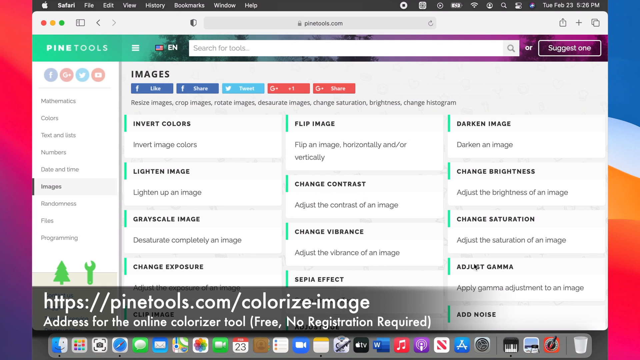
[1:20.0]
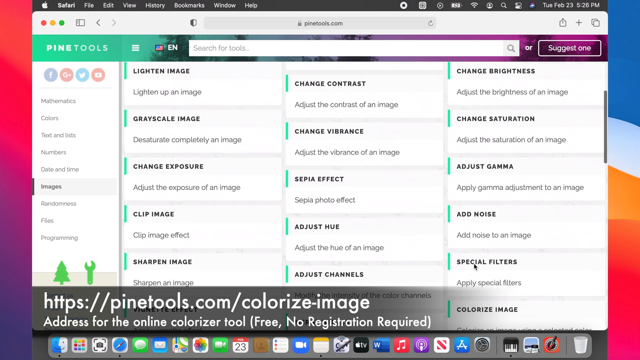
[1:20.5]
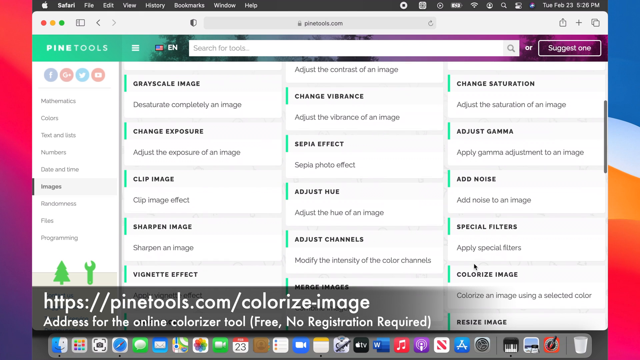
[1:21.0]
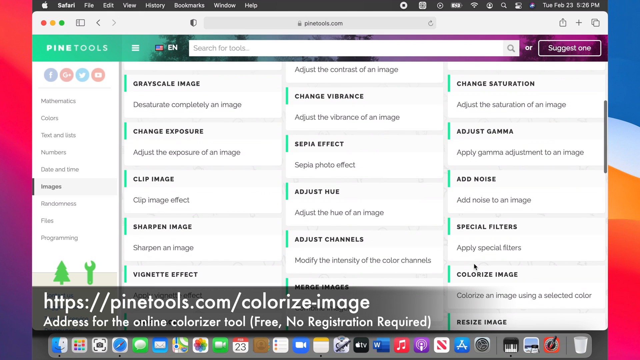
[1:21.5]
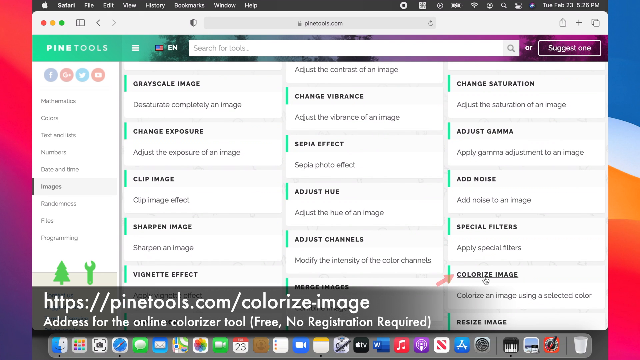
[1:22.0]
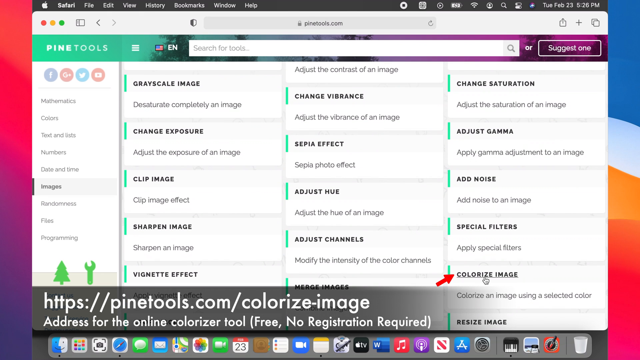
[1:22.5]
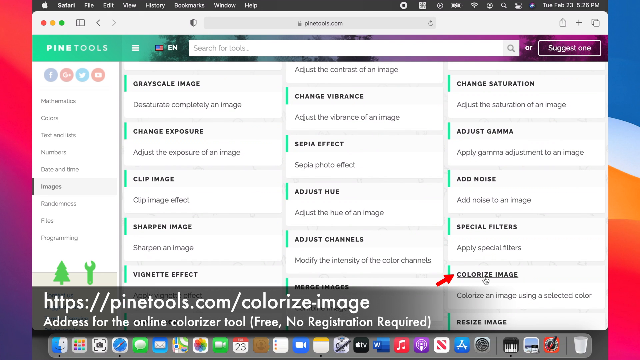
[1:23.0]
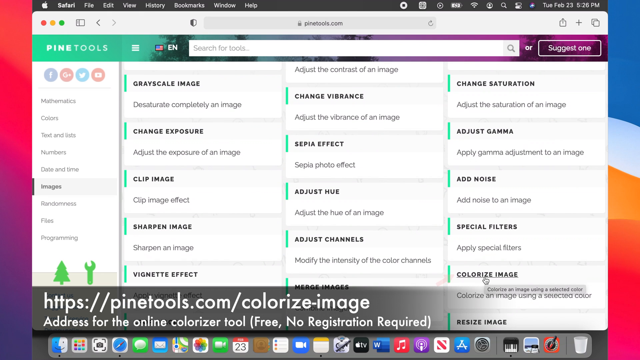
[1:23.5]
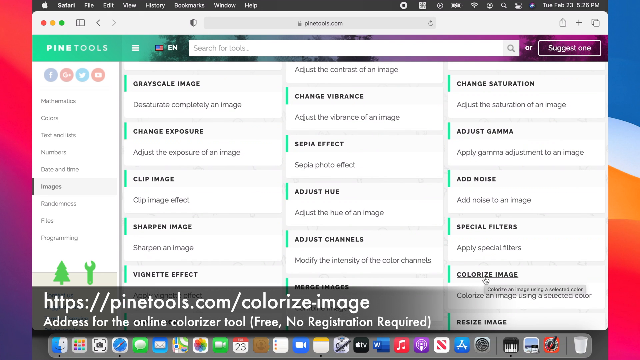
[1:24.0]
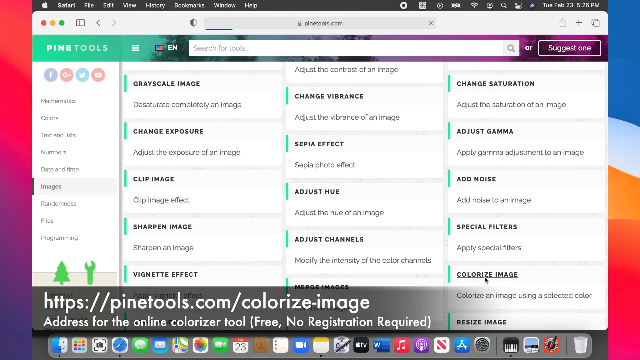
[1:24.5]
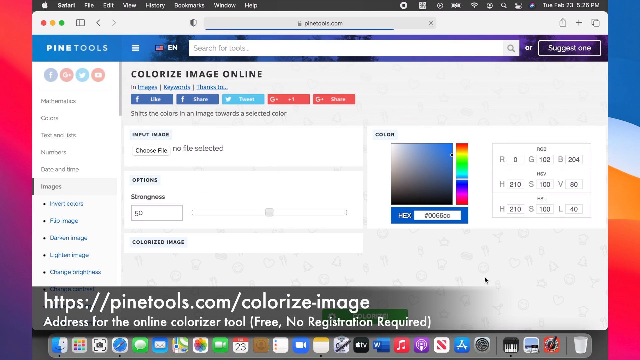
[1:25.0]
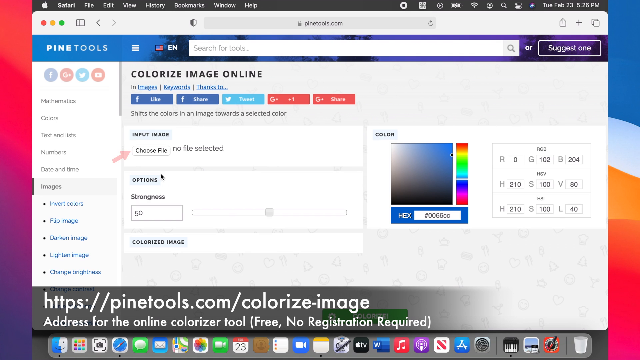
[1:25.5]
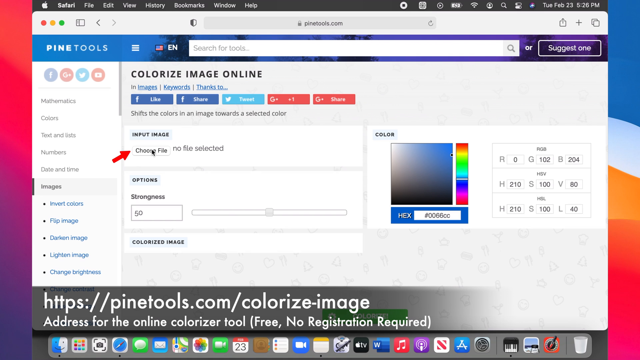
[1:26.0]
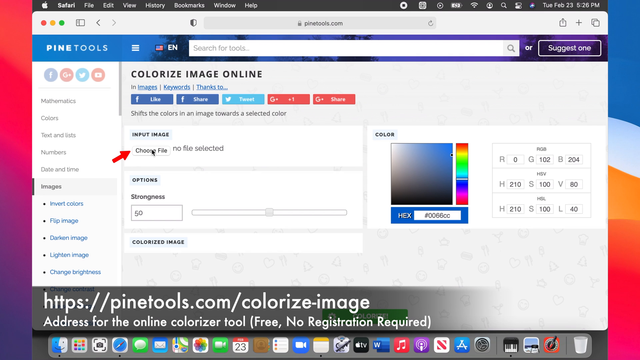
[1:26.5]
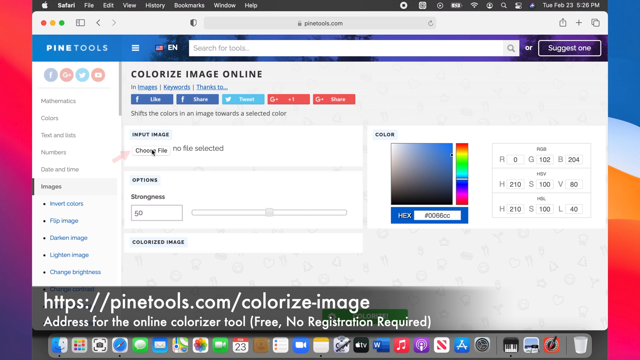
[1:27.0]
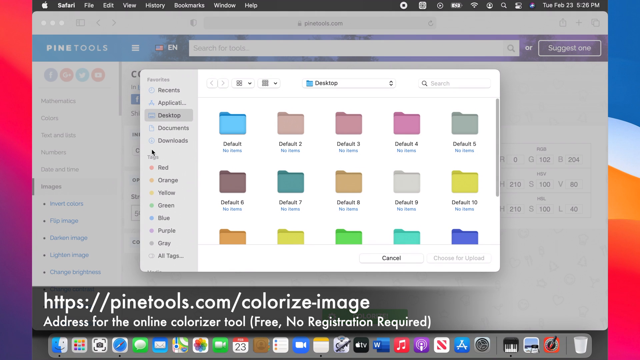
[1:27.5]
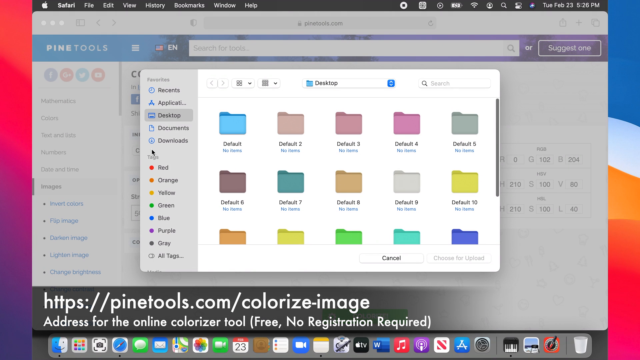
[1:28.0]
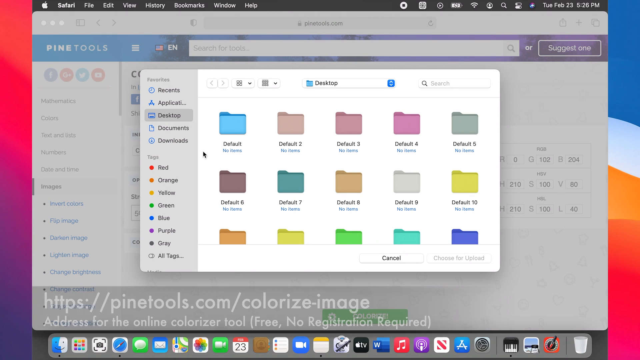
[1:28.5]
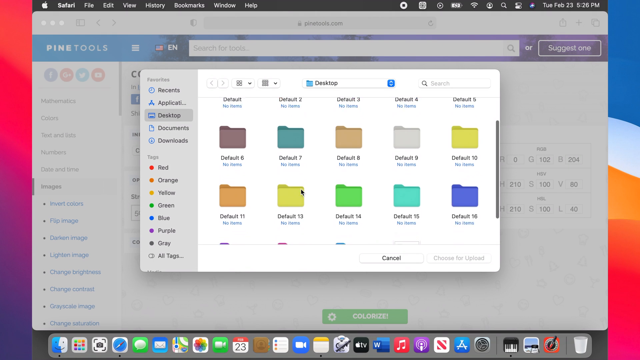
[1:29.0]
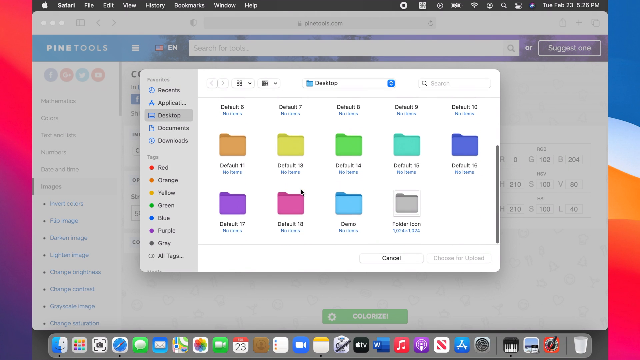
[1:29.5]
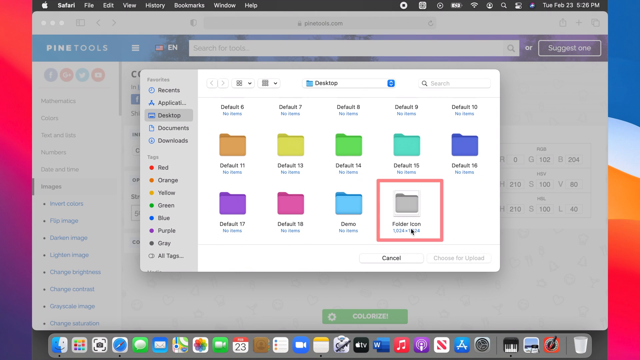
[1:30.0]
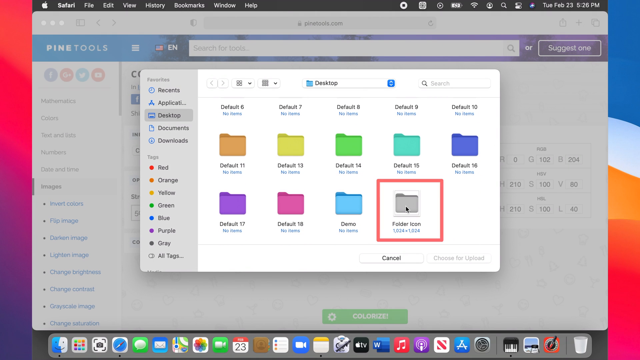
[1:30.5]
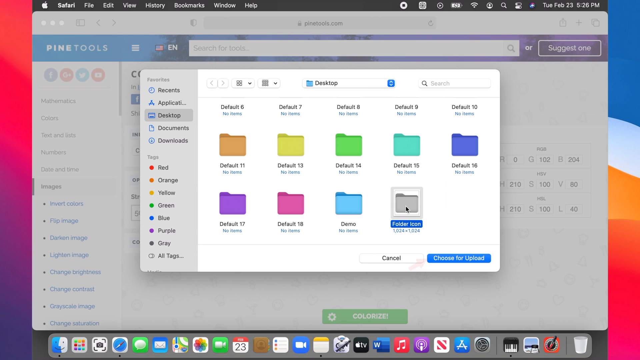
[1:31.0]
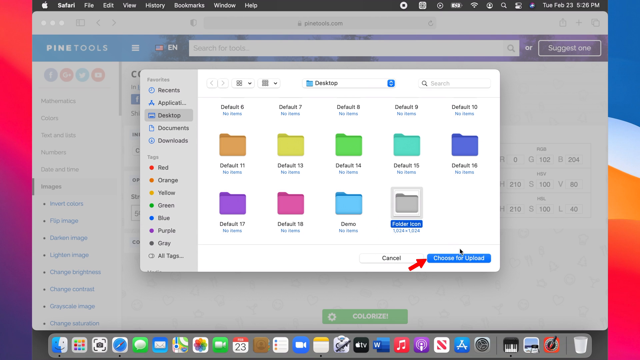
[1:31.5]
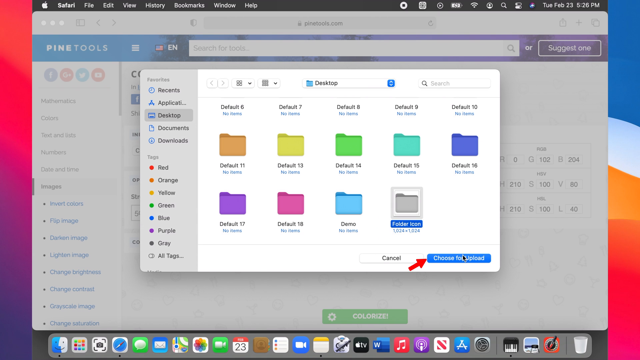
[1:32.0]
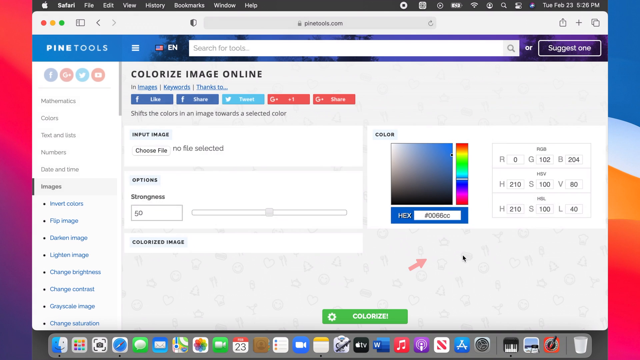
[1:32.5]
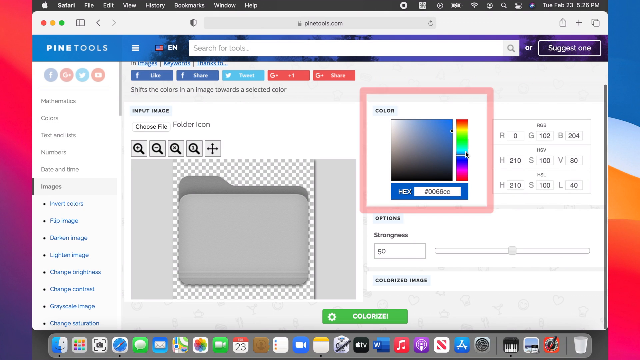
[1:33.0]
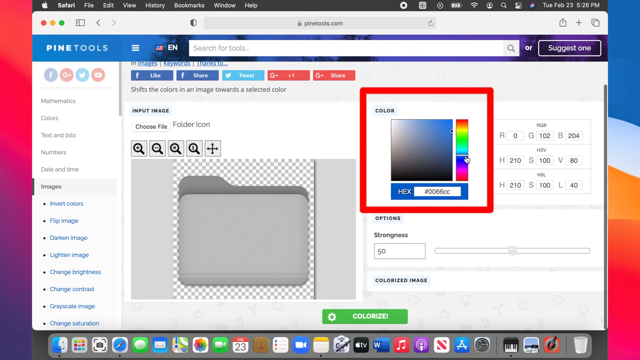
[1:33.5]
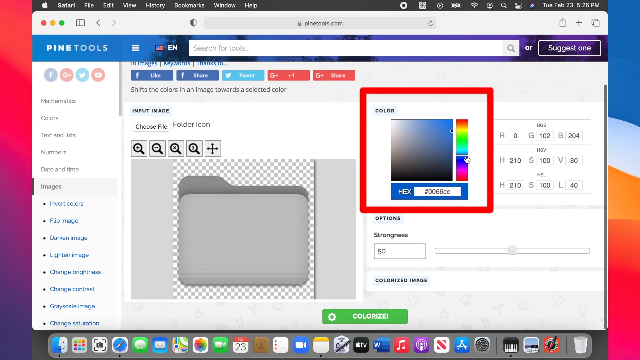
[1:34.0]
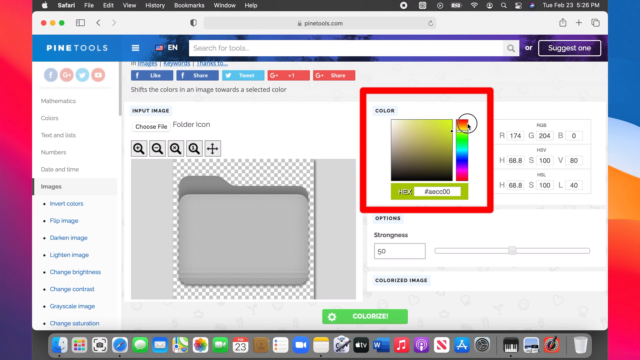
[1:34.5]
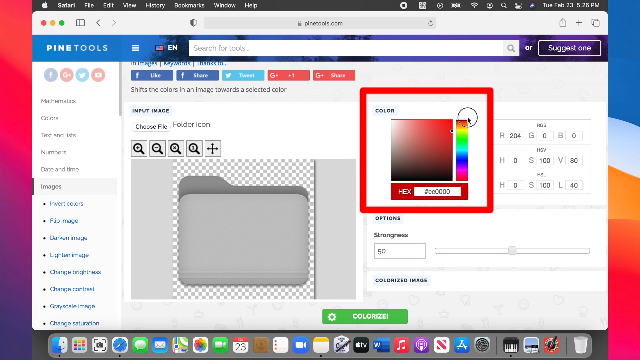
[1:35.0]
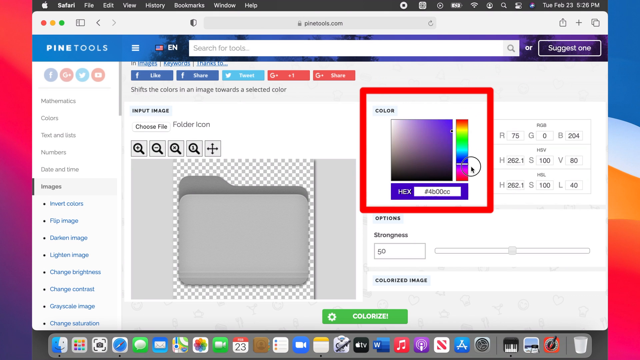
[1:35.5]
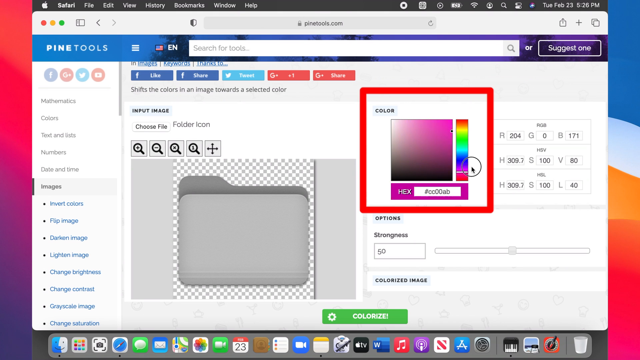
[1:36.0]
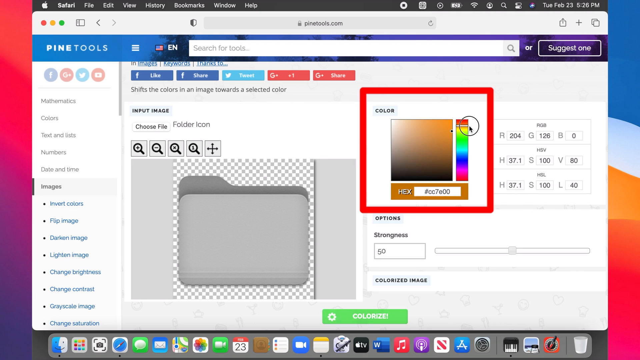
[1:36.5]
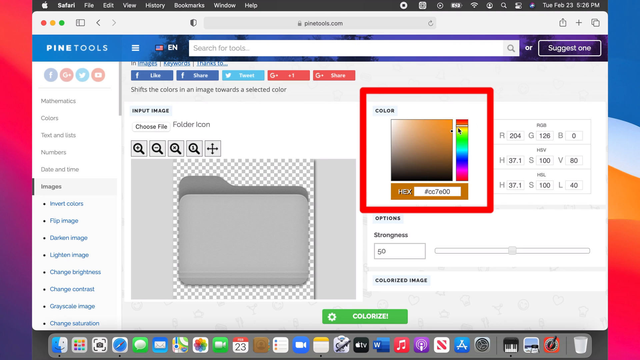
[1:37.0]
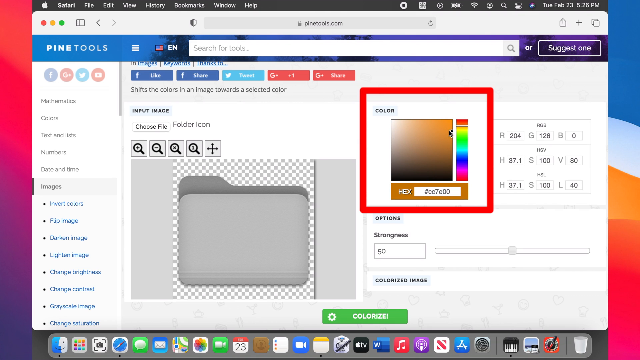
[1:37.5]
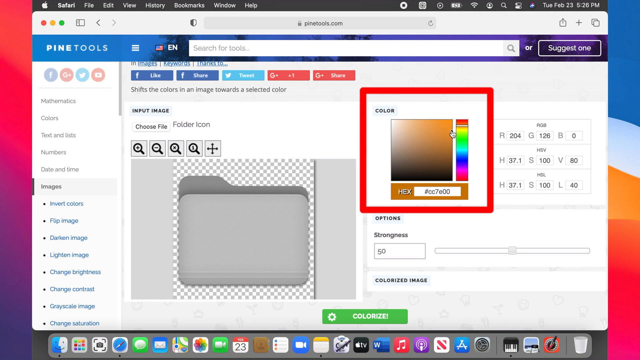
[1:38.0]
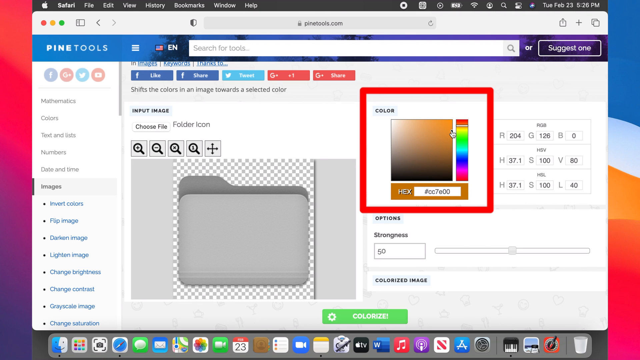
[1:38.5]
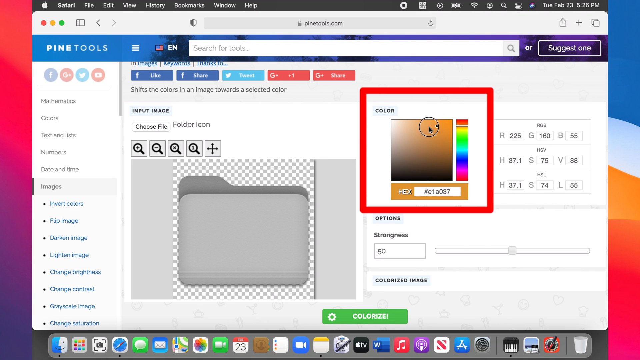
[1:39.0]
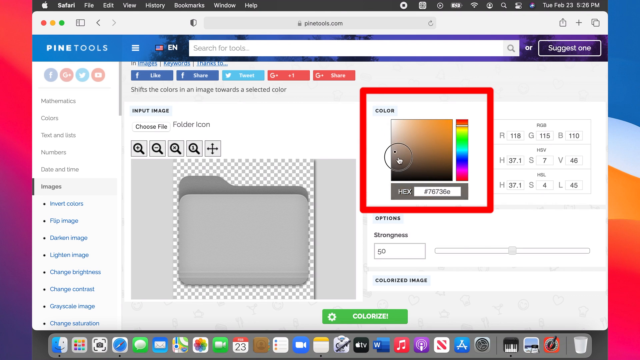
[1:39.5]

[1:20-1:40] The user scrolls on a page whose address includes "colorize-image", with text reading "address for the online colorizer tool" and, in parentheses, "free no registration required". The user then goes to "colorize image online", where a small red arrow points to "choose file no file selected". Choosing a file brings up a whole bunch of multicolored files, and the user clicks the one just created. An orange color is chosen, the cursor is placed in the middle, and an orange folder apparently results.